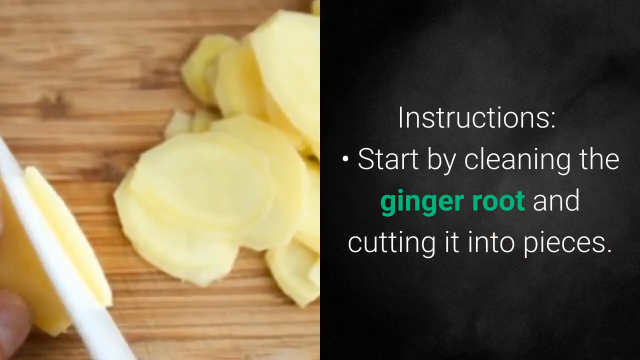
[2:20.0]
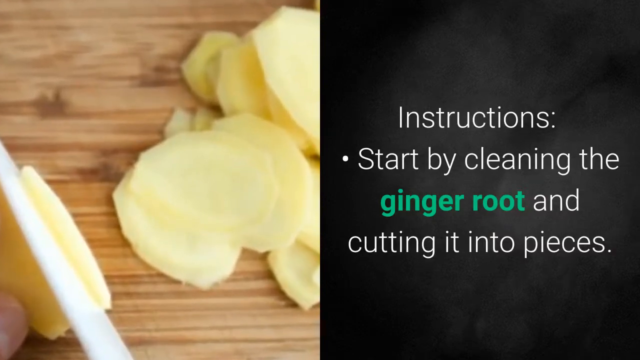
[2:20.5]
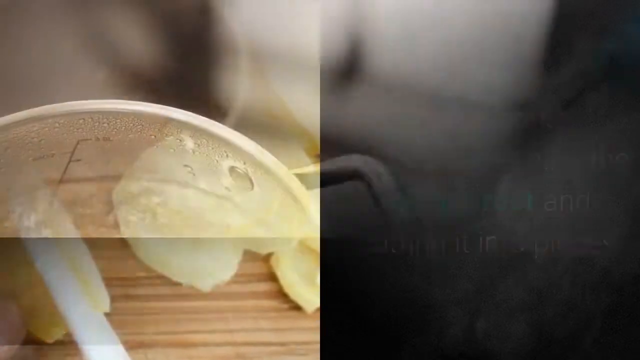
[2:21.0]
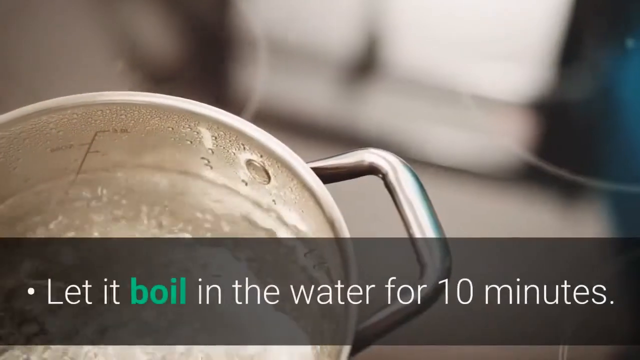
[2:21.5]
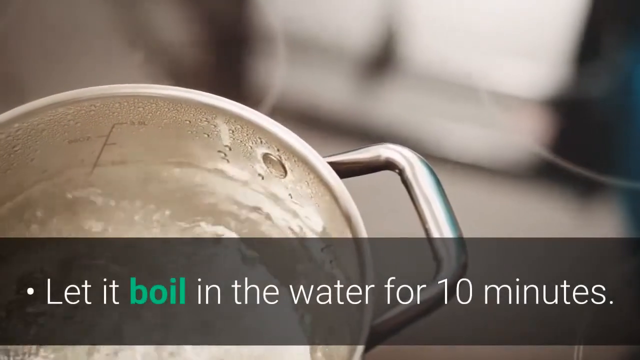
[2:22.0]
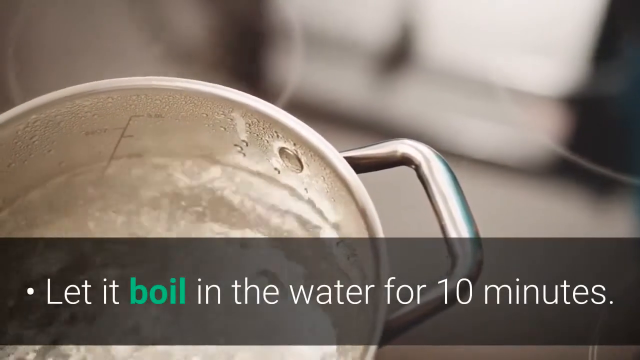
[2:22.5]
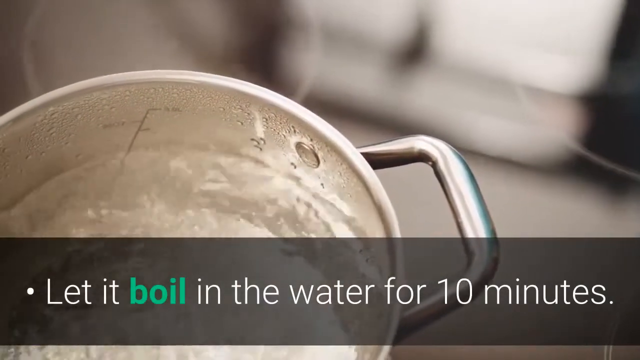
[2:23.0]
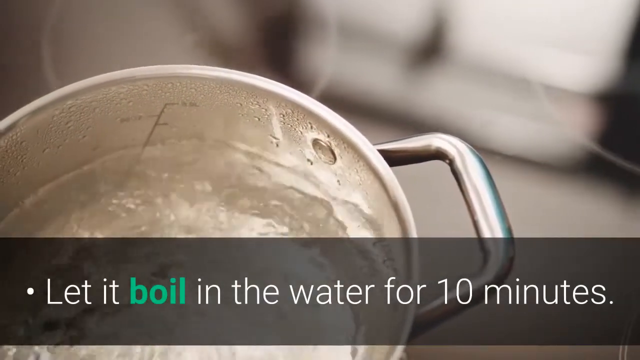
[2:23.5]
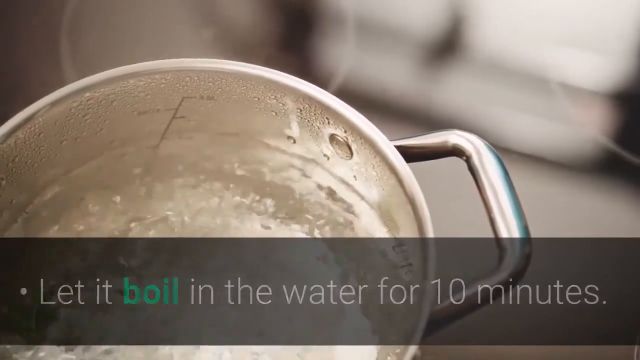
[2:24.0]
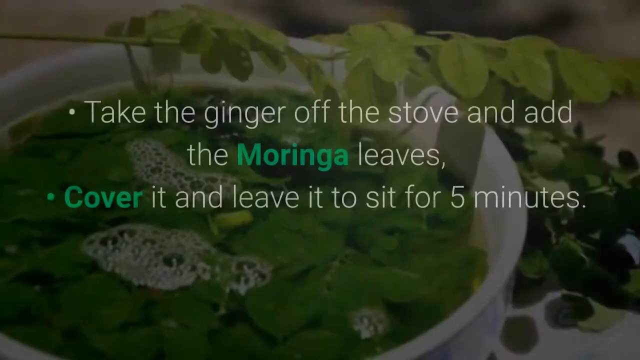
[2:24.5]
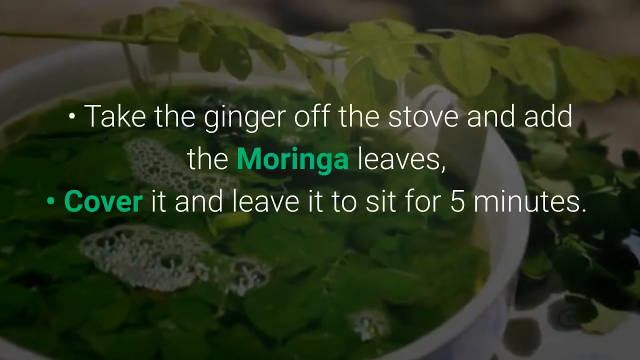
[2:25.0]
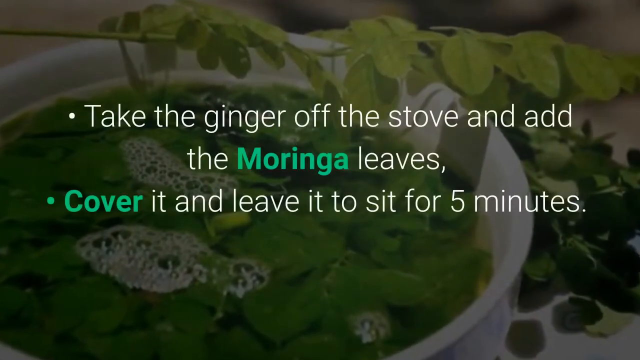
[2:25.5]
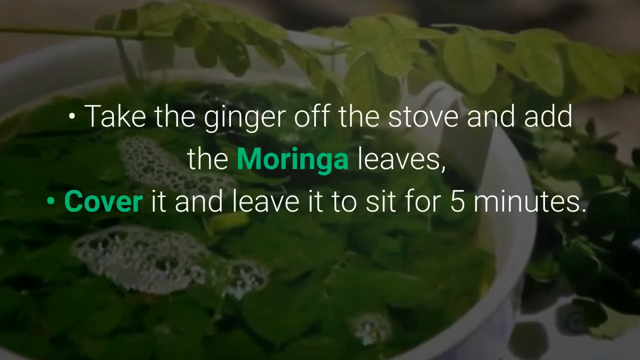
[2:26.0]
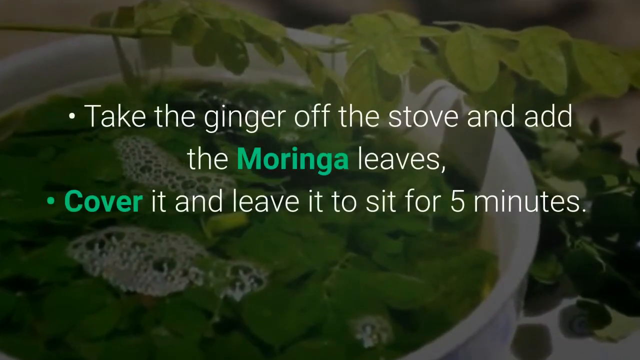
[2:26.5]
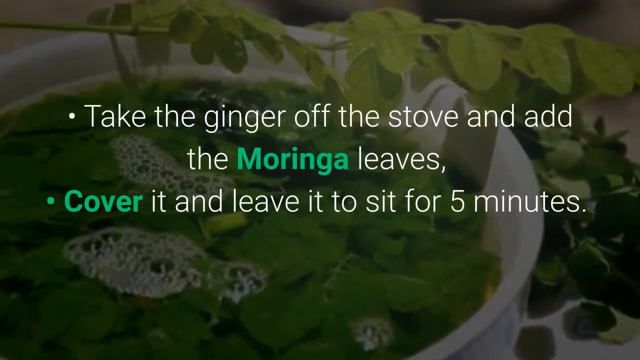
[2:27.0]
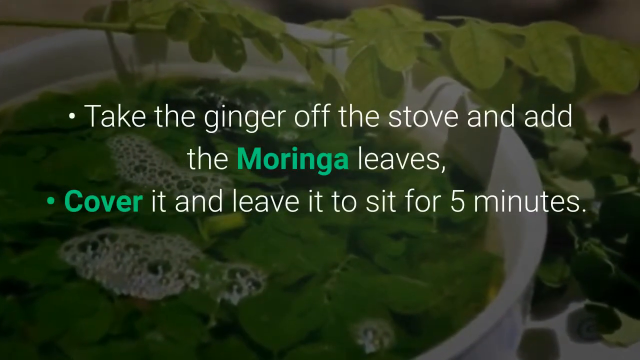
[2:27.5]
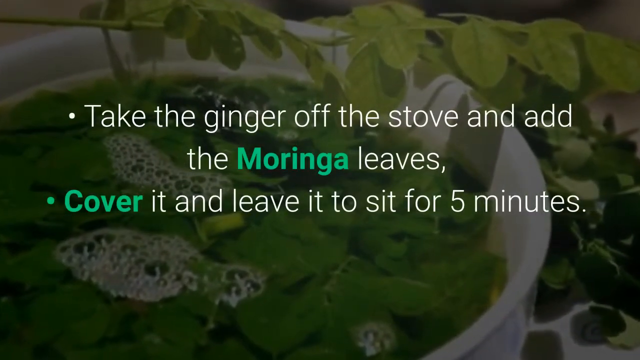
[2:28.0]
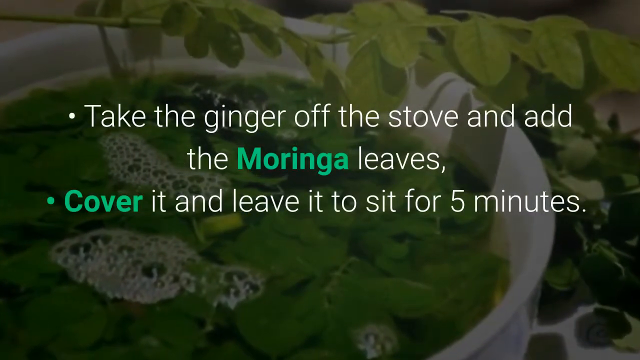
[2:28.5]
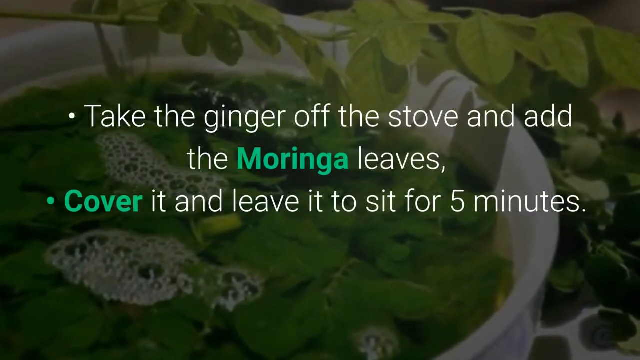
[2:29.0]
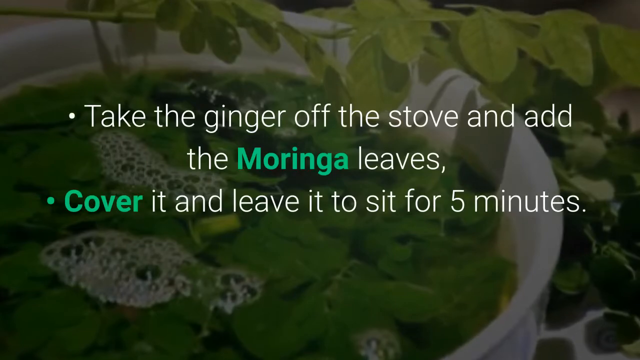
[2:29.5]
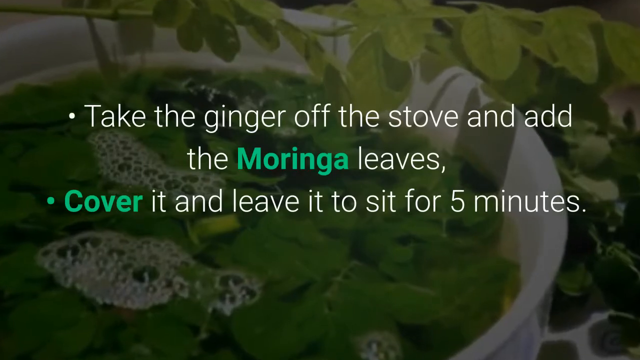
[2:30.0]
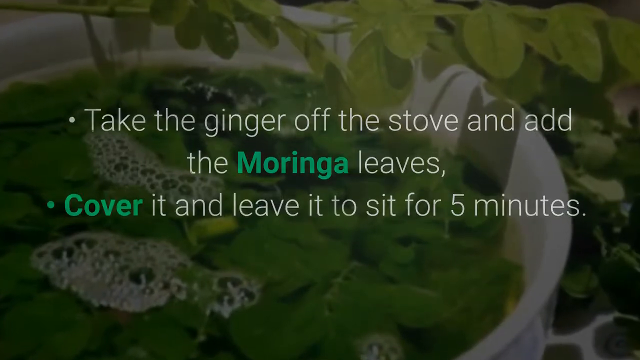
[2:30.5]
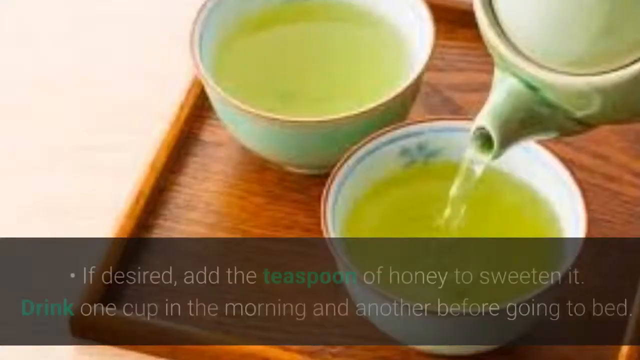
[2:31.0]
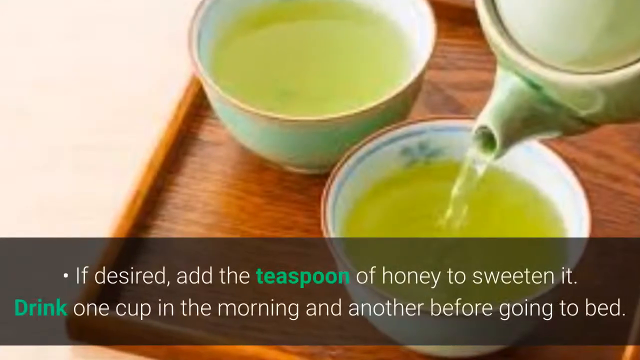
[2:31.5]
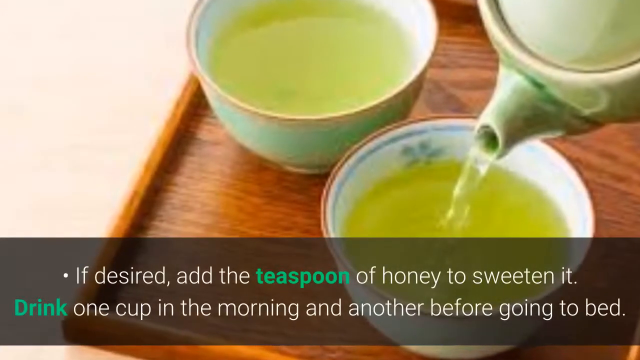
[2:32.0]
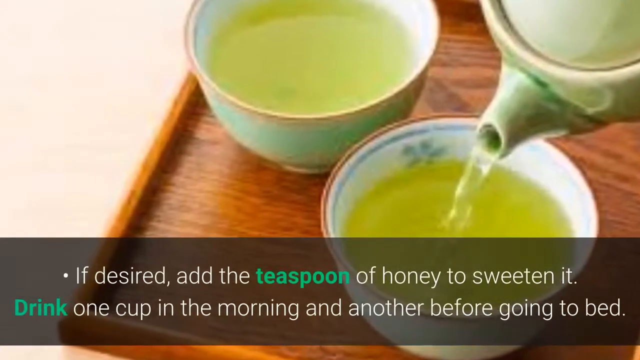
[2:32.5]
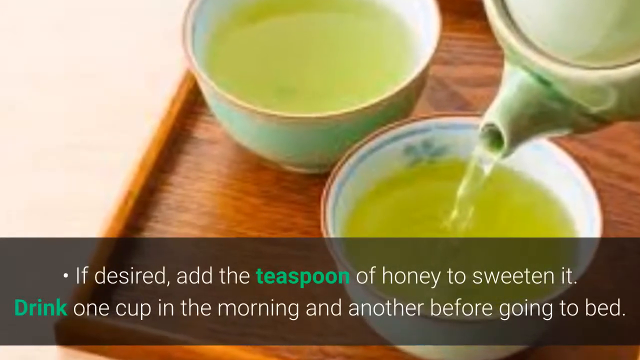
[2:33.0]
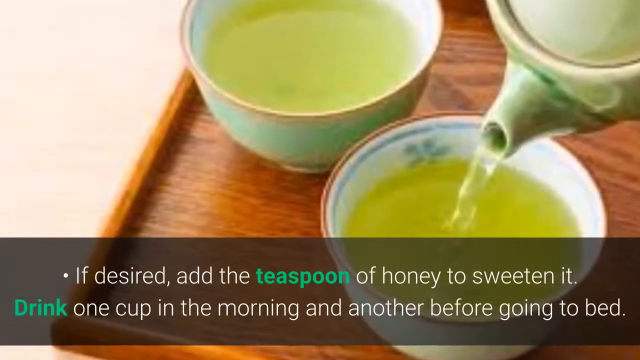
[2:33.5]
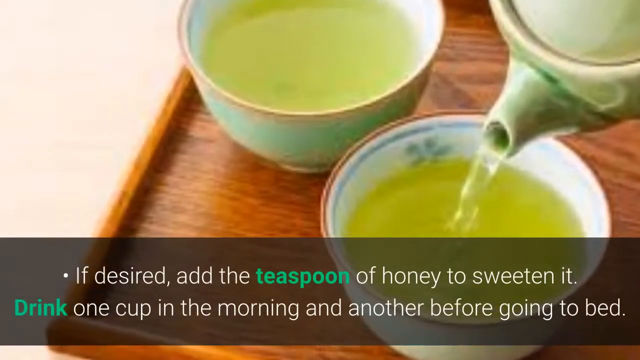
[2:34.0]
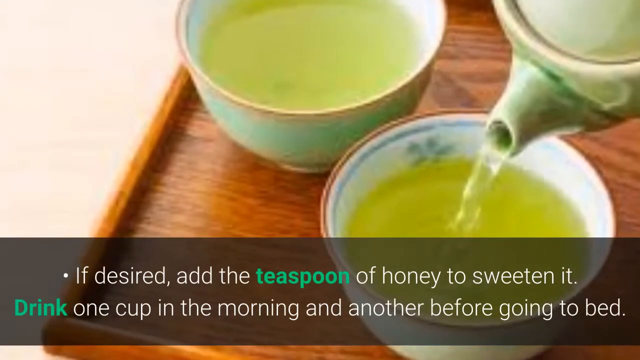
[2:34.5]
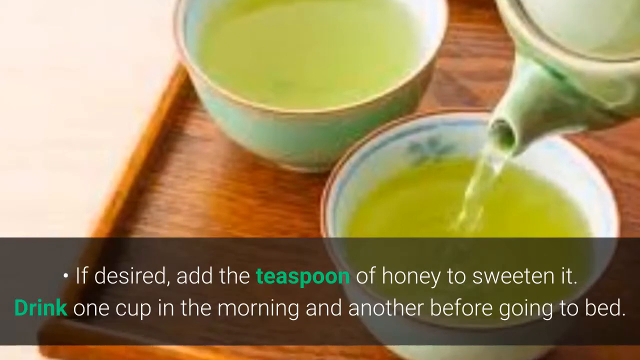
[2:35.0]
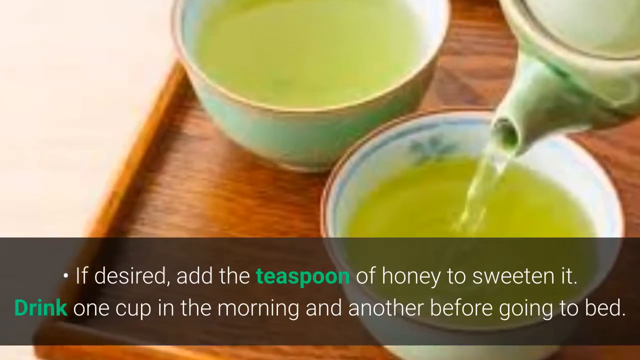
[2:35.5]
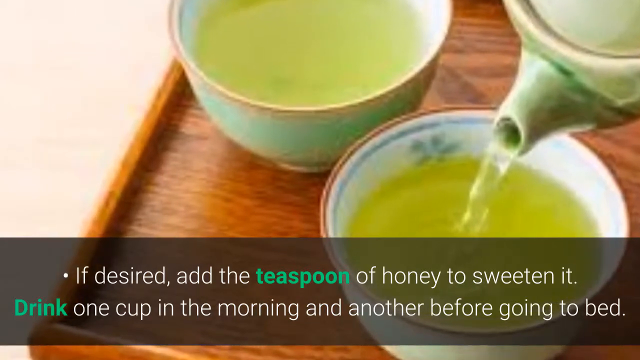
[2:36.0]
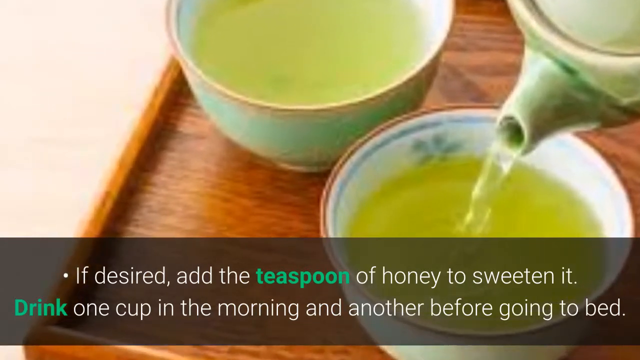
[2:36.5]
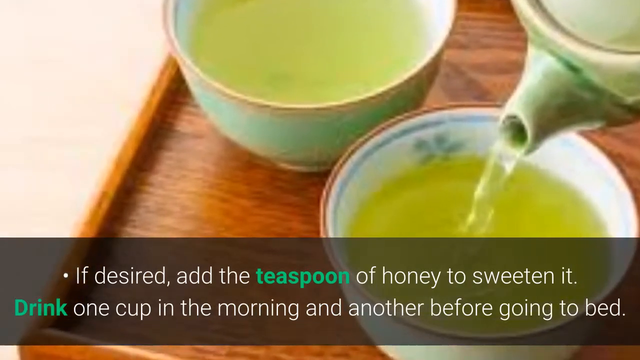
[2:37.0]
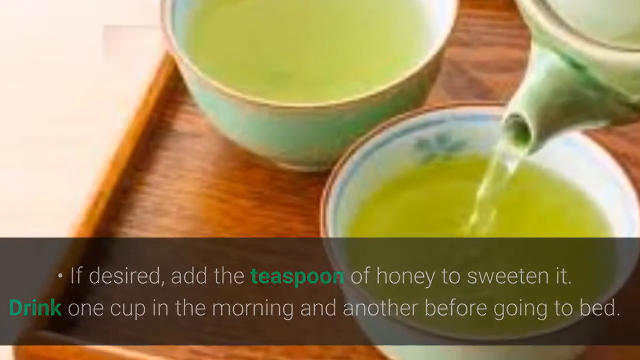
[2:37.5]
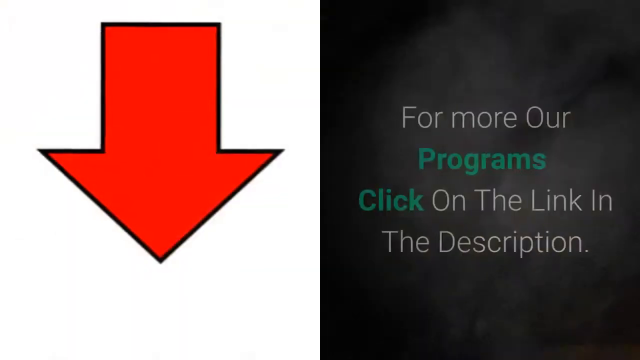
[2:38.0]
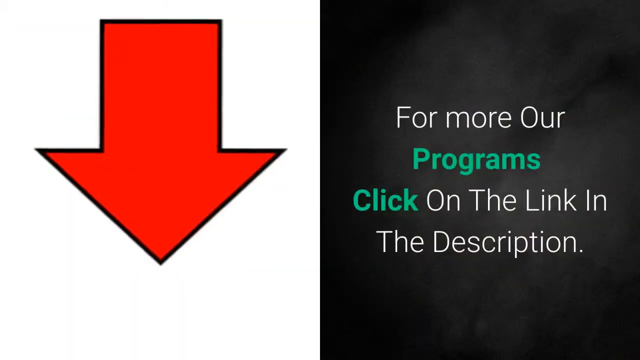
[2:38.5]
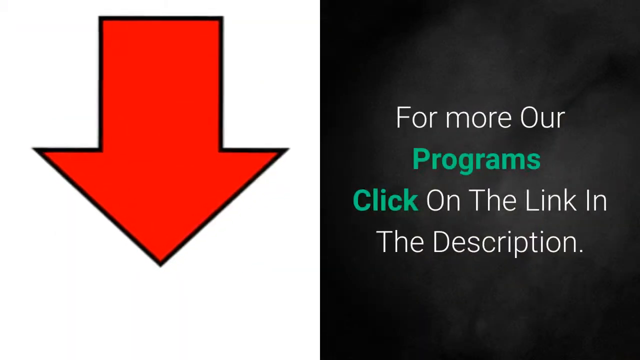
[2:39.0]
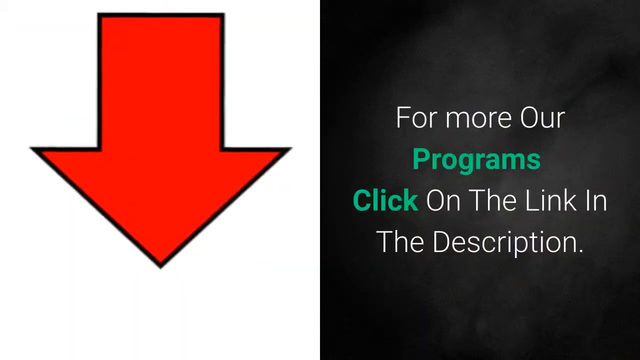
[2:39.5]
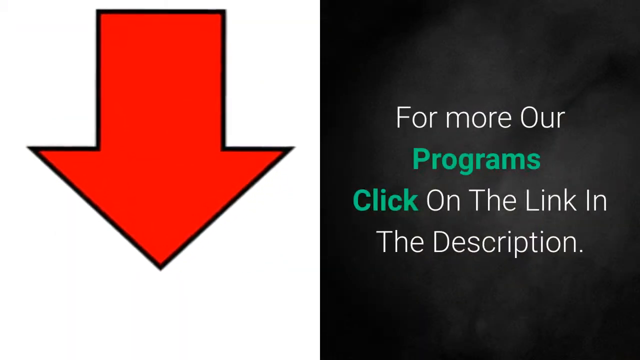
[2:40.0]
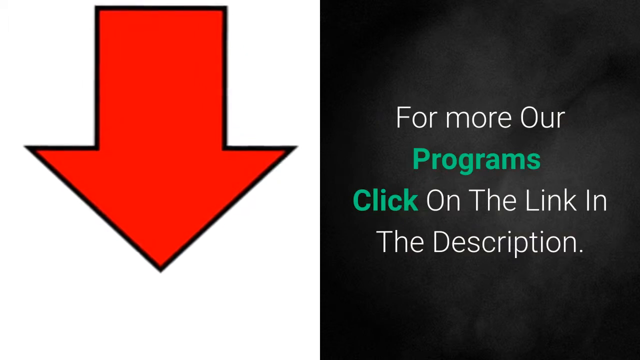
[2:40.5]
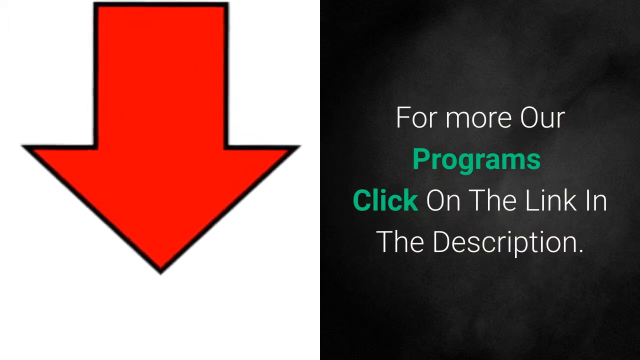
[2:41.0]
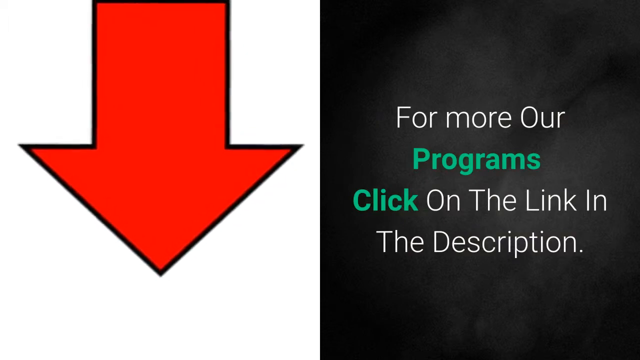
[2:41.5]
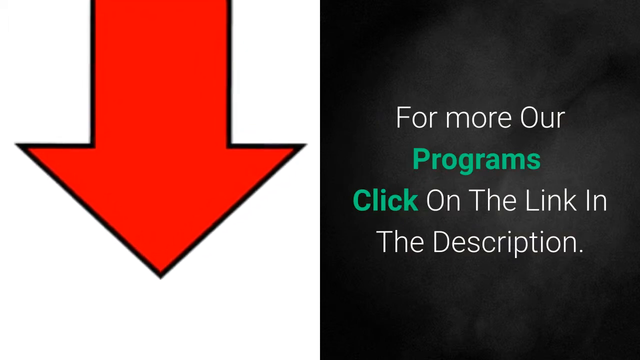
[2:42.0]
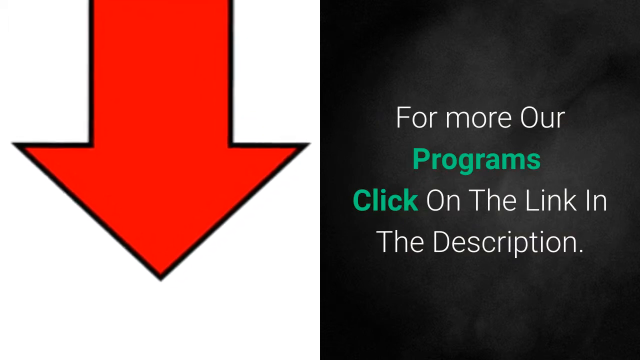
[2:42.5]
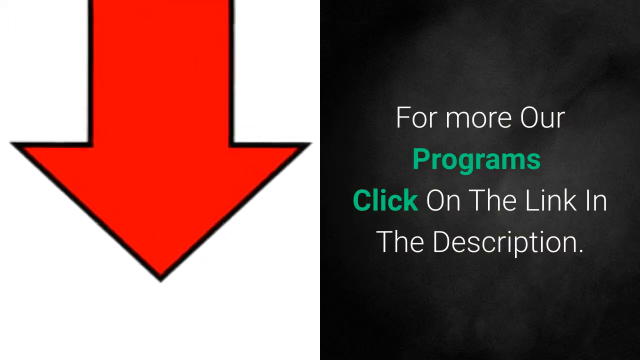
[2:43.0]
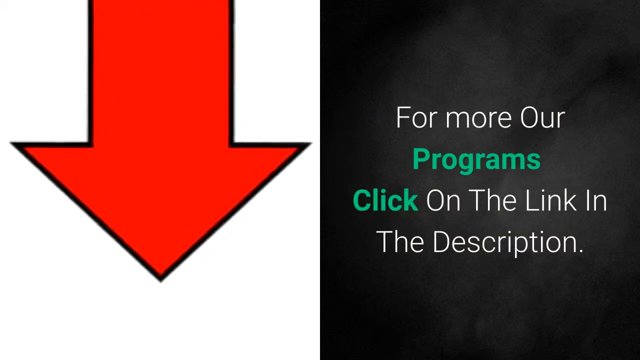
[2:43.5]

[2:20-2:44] Text instructs boiling in water for 10 minutes, taking the ginger off the stove and adding the moringa leaves, then covering it and leaving it to sit for five minutes. It continues: "if desired, add the teaspoon of honey to sweeten it. Drink one cup in the morning and another one before going to bed." Then it says "for more of our programs, click on the link in the description," with a cartoon downward arrow on the left-hand side. The kitchen scene shows the ingredients ready.